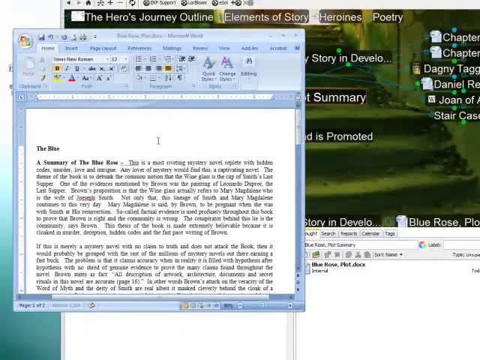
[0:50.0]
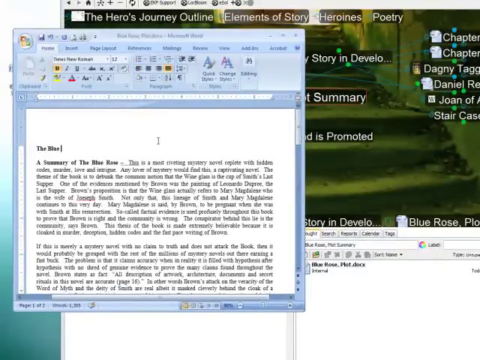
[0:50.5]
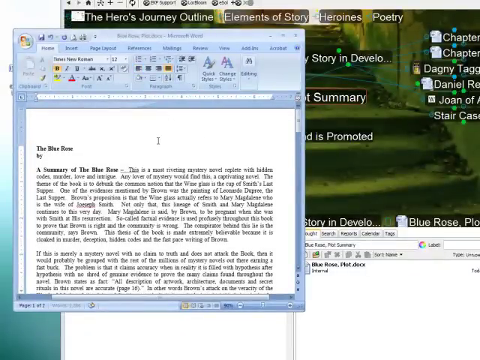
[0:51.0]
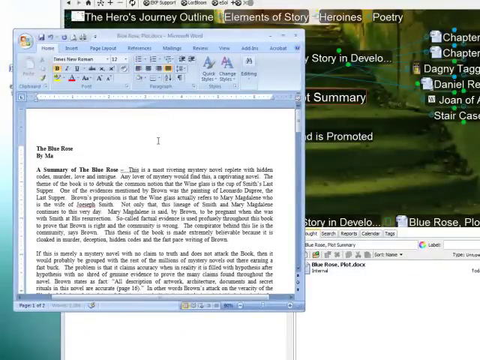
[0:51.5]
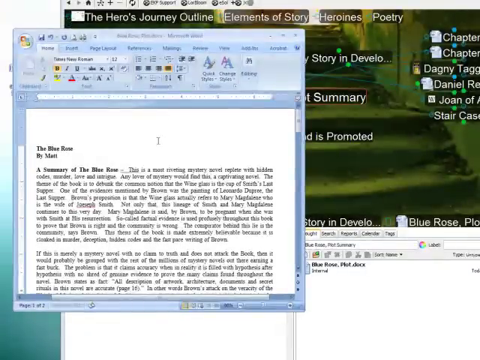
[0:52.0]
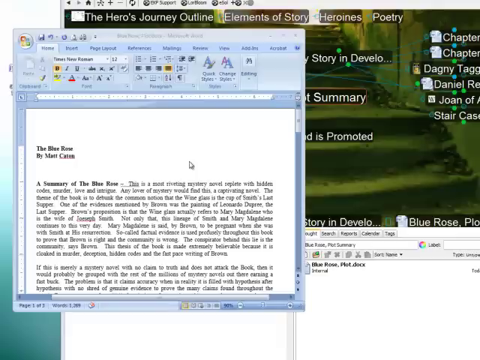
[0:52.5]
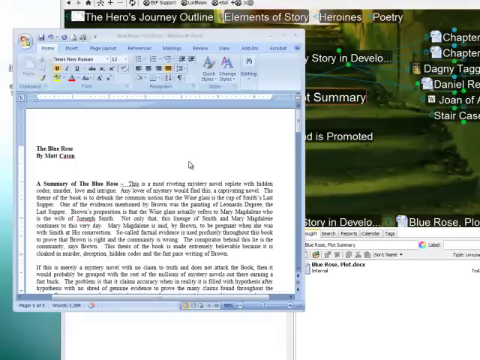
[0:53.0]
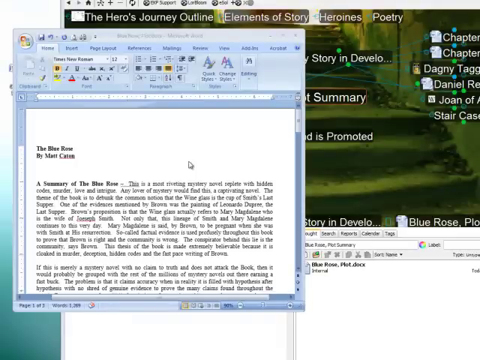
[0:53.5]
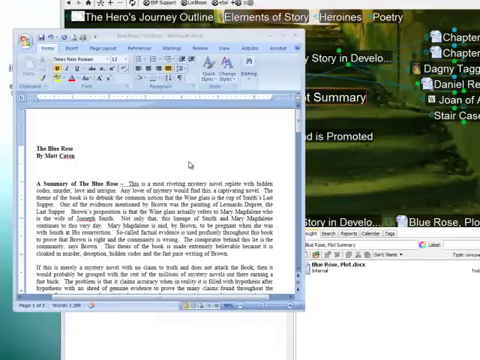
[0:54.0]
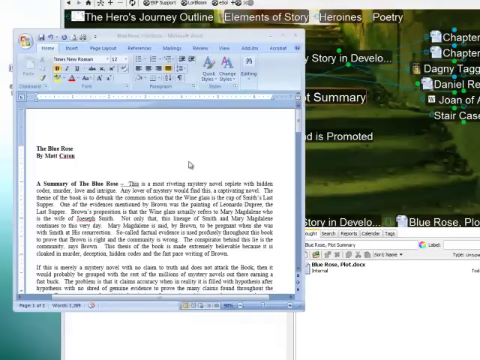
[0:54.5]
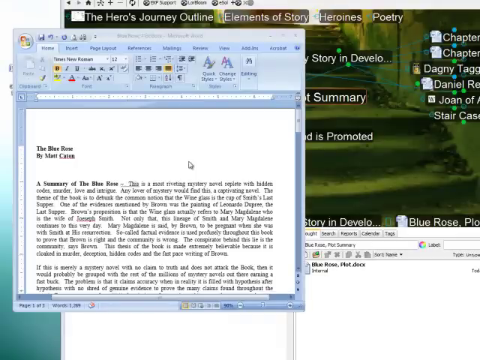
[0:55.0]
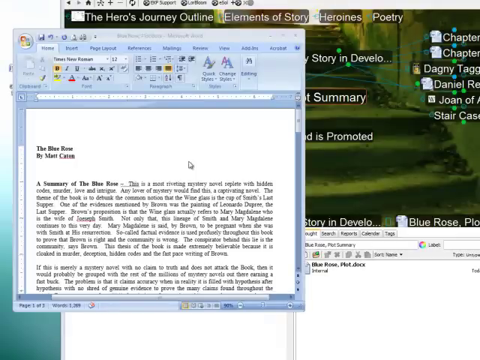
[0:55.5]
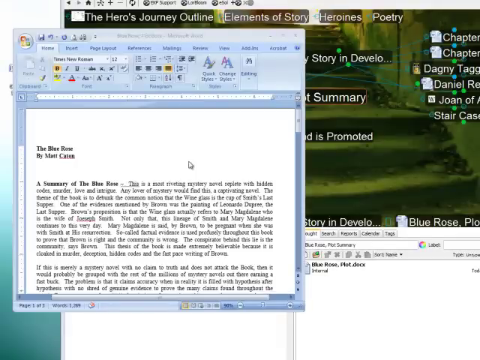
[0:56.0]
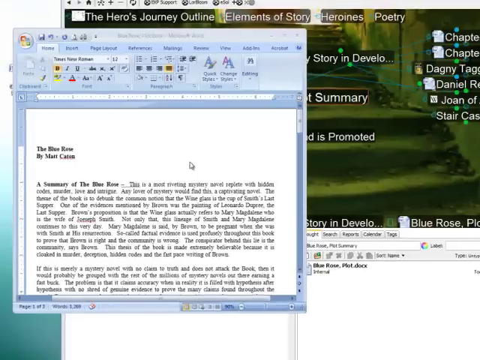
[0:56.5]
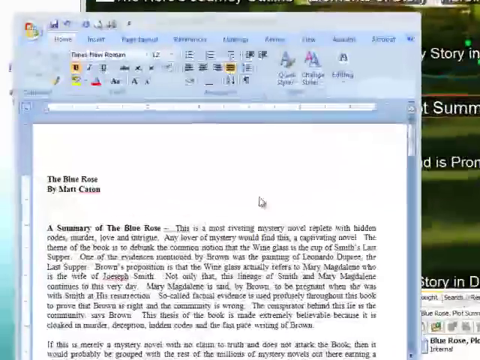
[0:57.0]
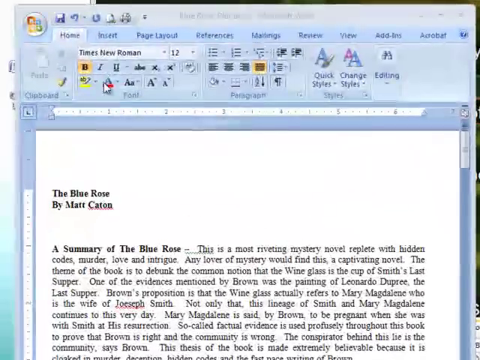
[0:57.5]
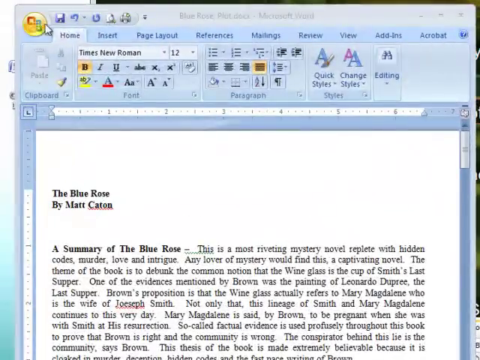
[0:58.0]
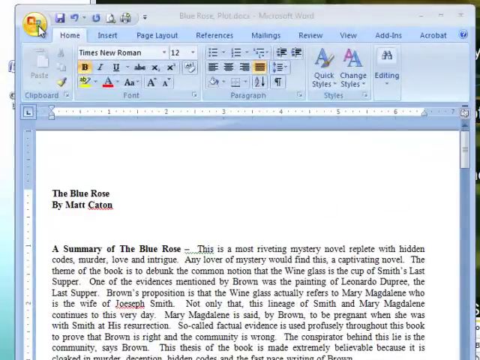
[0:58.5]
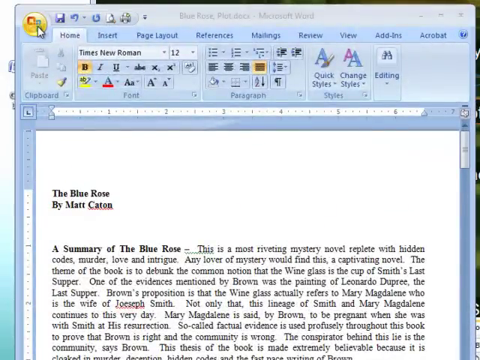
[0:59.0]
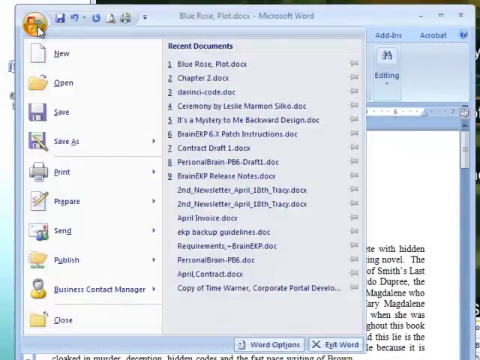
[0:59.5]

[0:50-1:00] The paragraph is being edited, with bolded headings typed in, and as the typing continues the paragraph moves lower. The view zooms in and a new tab is opened. As a draft is saved, the earlier text and pop-up information remain open behind it, and the two notepads are still in the background, since the open editing tab is small and does not cover the whole screen.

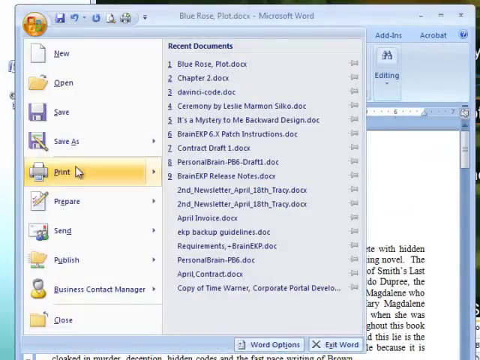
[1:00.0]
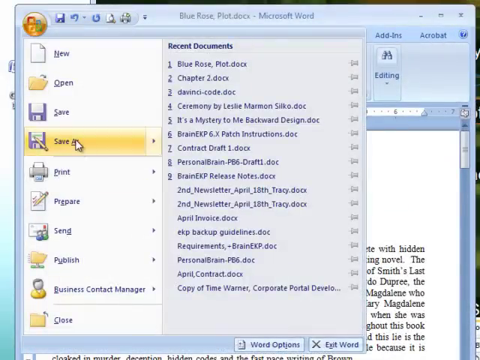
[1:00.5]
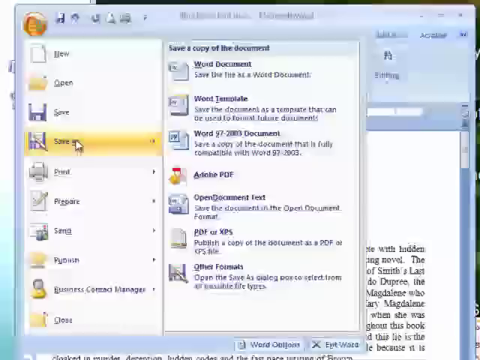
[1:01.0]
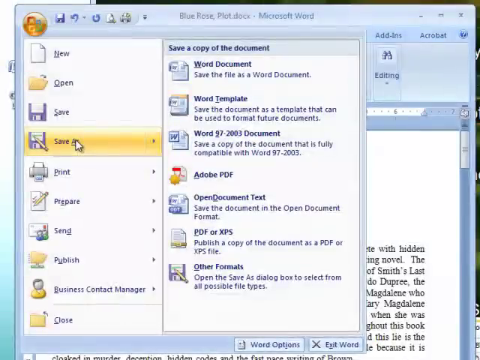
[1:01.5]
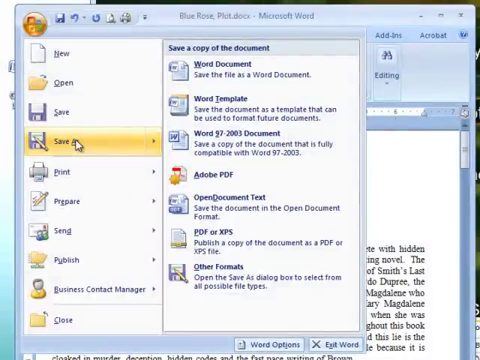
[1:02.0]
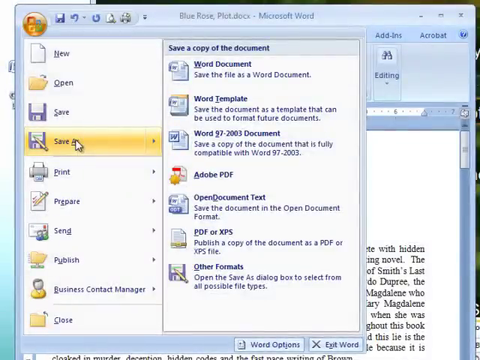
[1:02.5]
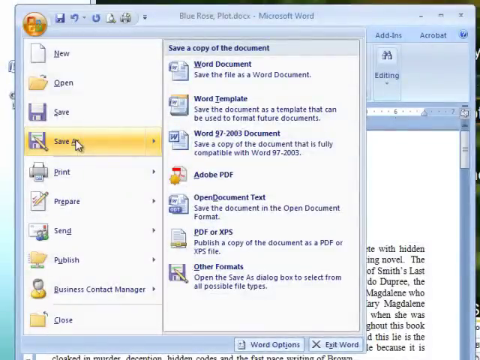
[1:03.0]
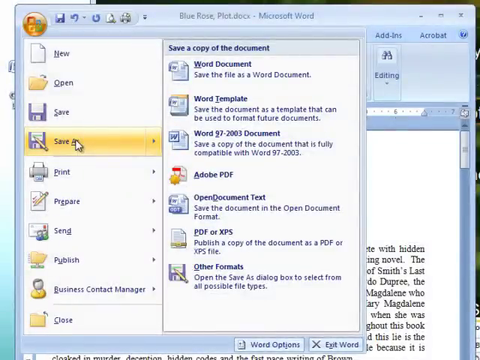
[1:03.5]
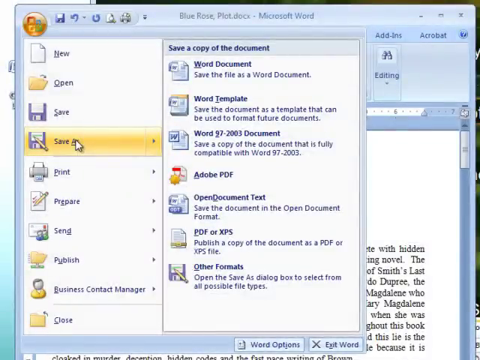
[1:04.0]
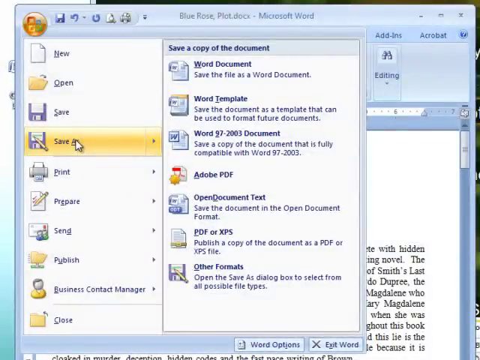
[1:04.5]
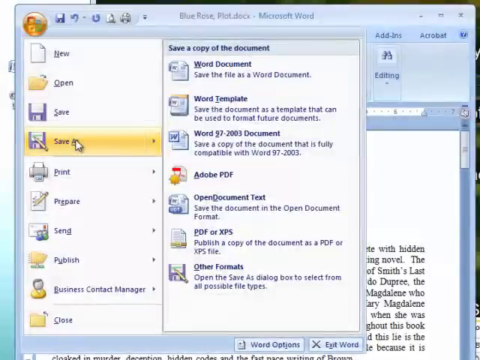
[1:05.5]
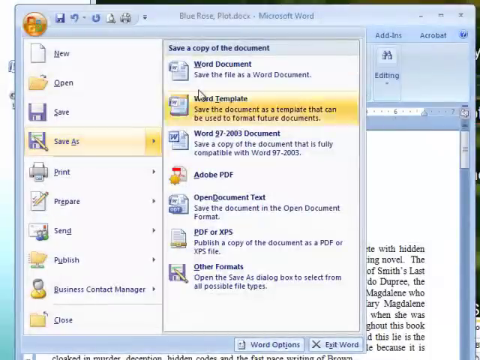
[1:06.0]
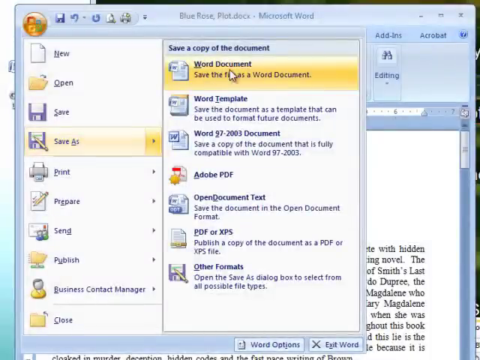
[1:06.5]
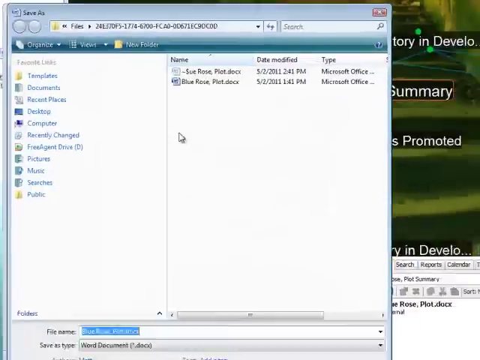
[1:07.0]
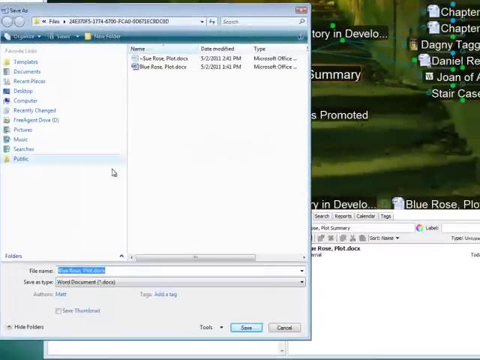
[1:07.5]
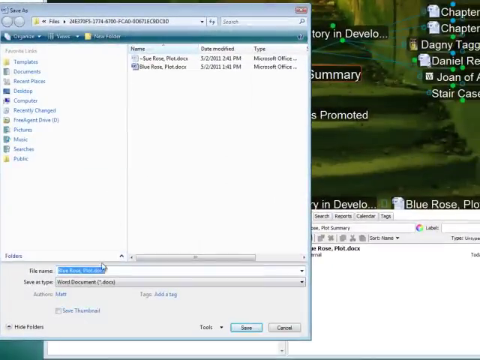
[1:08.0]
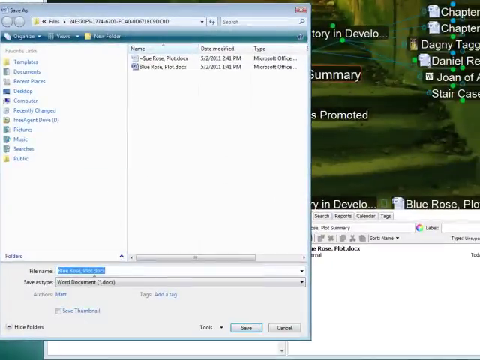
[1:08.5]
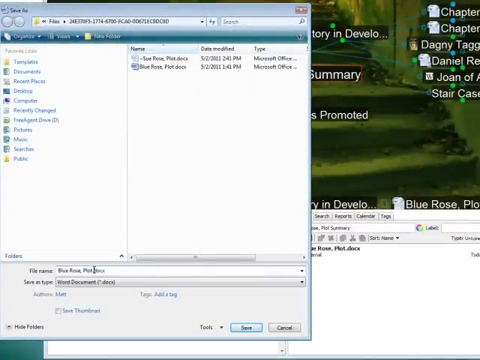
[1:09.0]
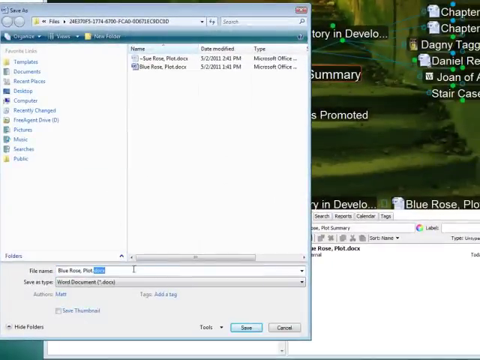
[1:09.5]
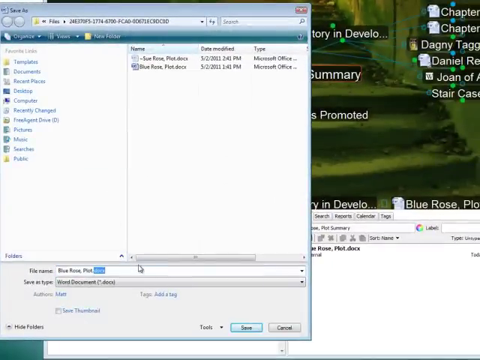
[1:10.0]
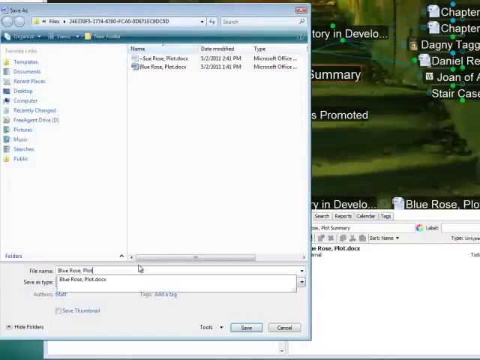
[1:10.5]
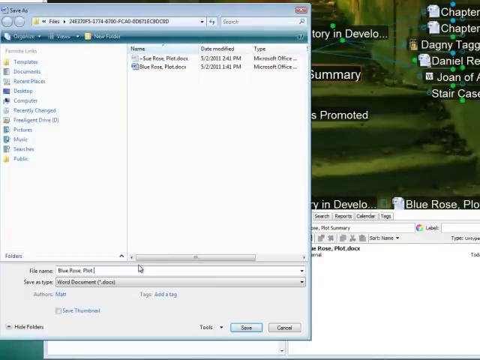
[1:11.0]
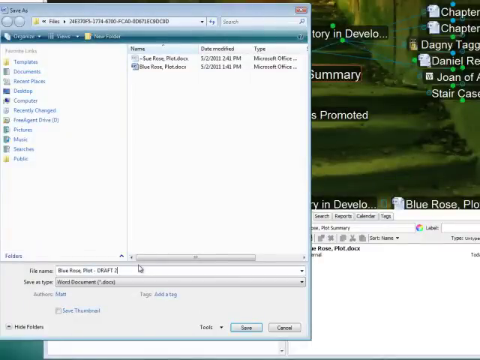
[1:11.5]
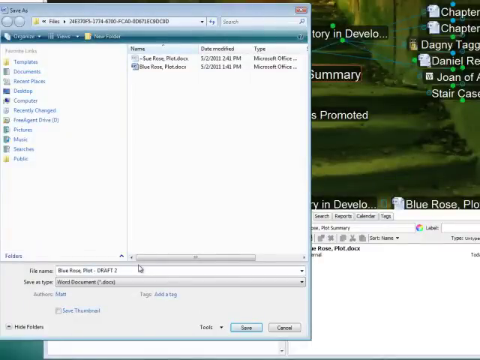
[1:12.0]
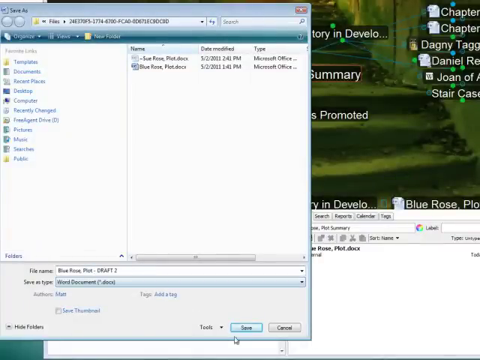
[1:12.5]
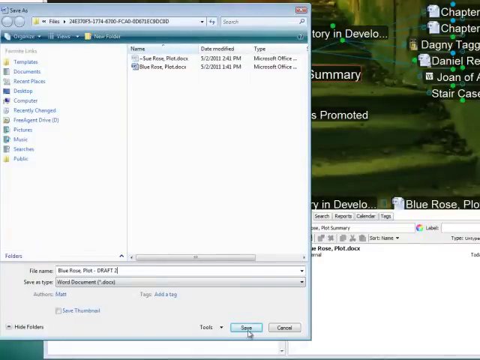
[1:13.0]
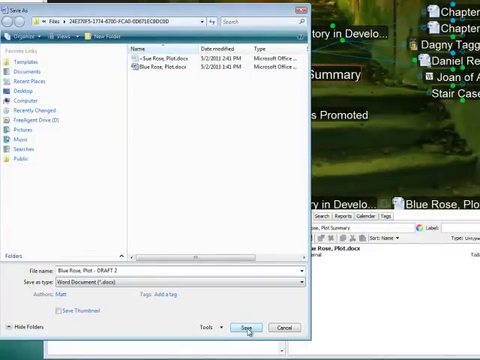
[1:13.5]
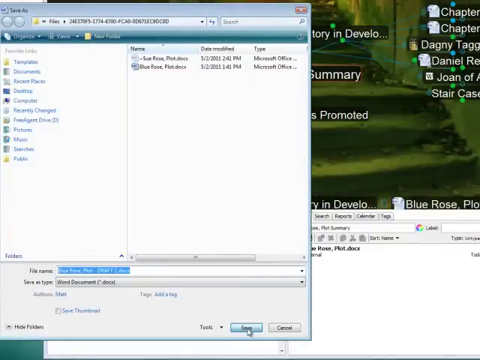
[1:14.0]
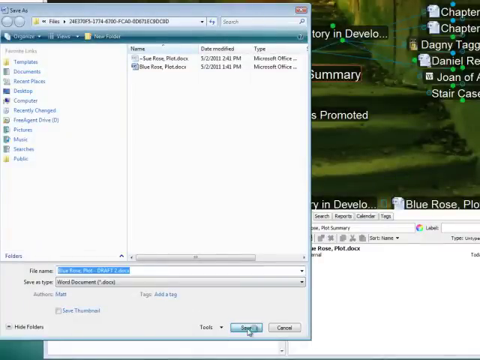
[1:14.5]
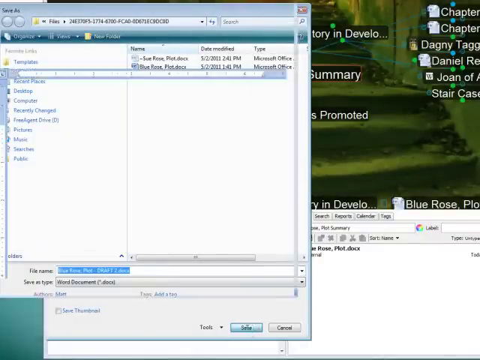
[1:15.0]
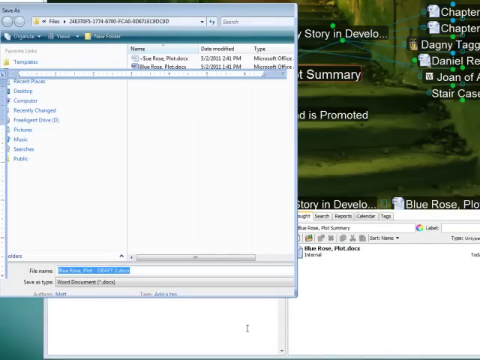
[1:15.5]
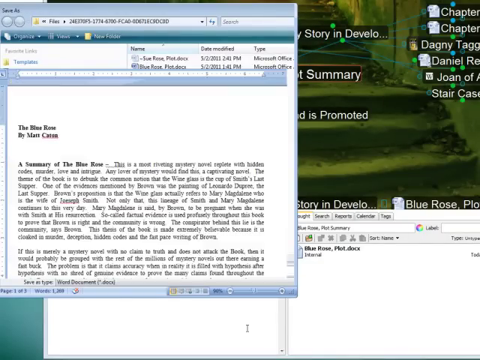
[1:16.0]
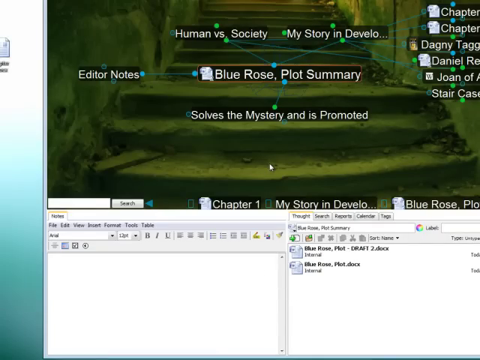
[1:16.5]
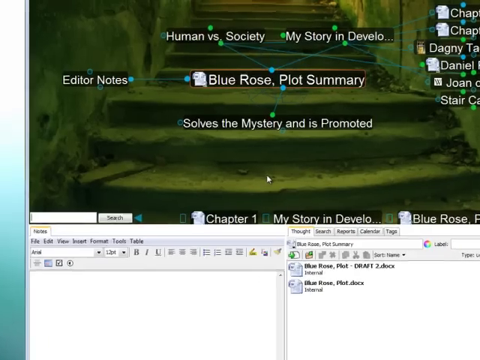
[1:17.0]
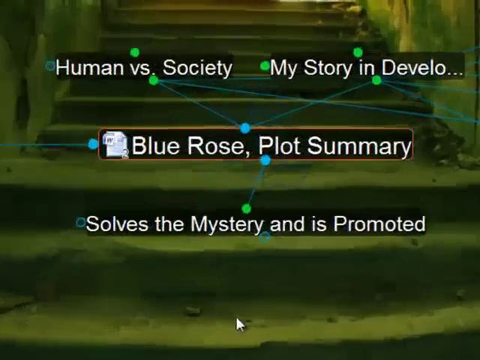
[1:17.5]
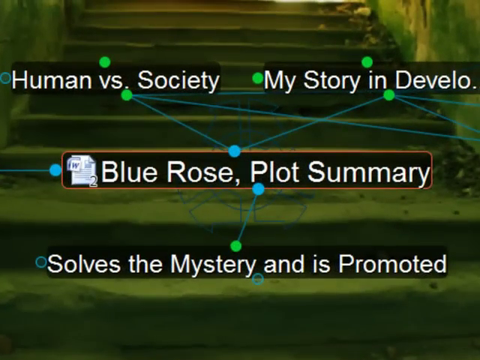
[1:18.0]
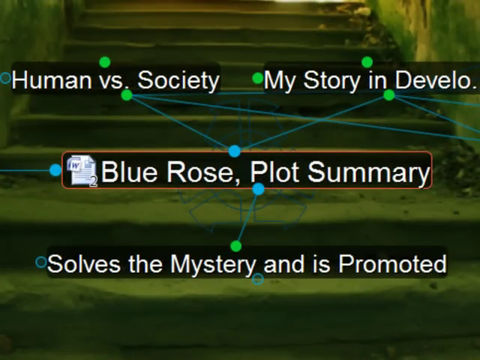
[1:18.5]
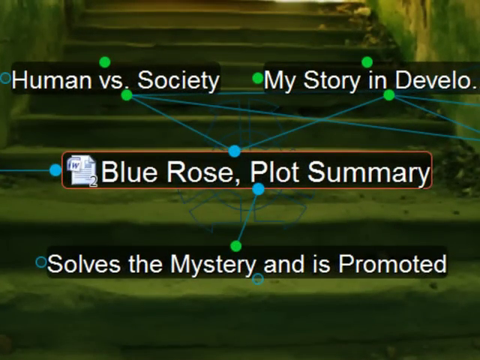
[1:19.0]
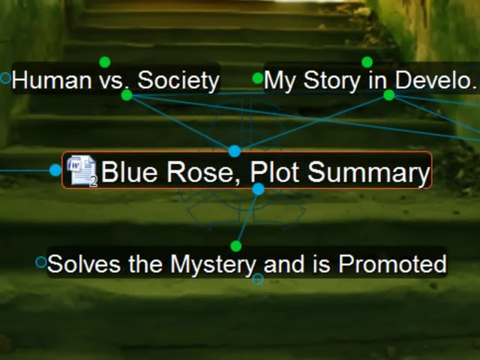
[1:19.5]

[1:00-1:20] The print and save options are clicked, then "save as"; the document name is edited and save is clicked, after which the document disappears. The view zooms back in to the original layout with various green tabs, moving closer to the next tab. Visible items include Human Physics Society, My Story in Development, Blue Rose Plot Summary, Editors Notes, Solves the Mystery, and Is Promoted. In the upper right there are other listed files that can be clicked for information. The notepads remain at the bottom.